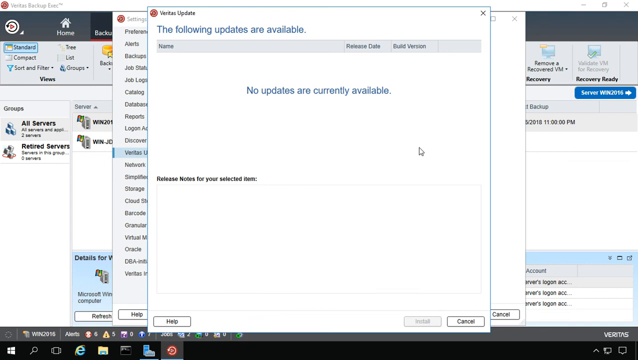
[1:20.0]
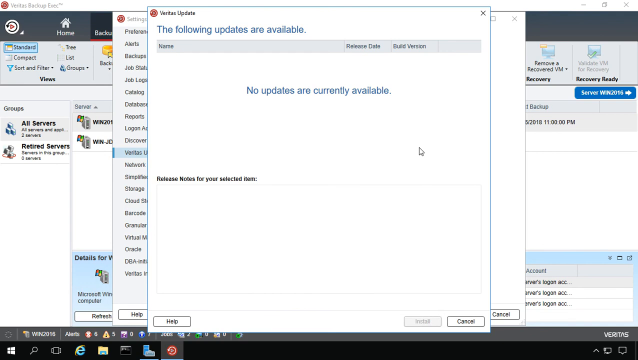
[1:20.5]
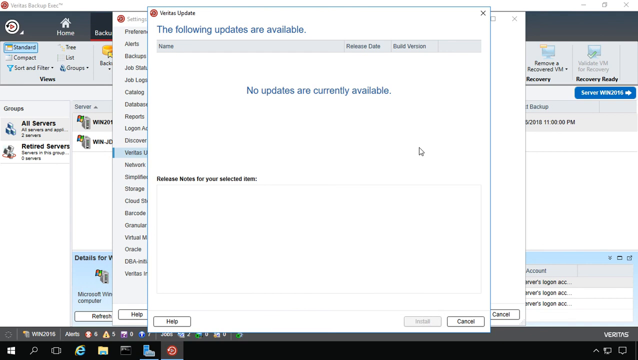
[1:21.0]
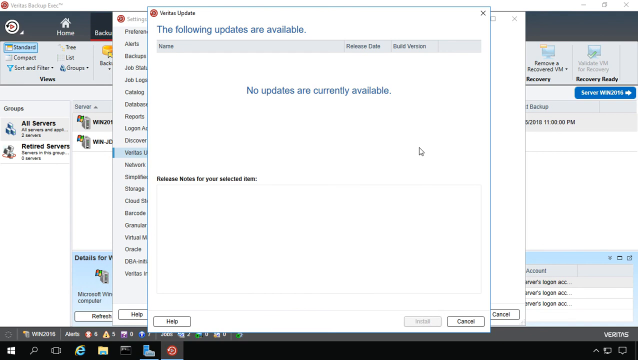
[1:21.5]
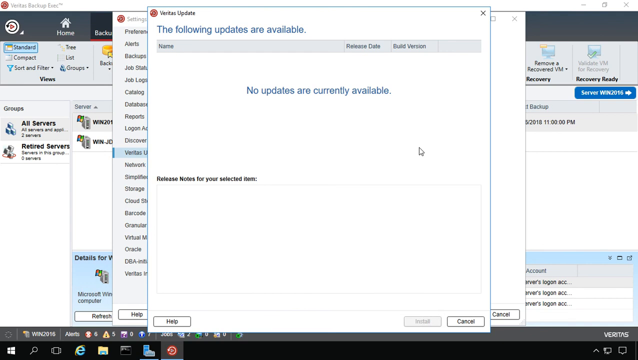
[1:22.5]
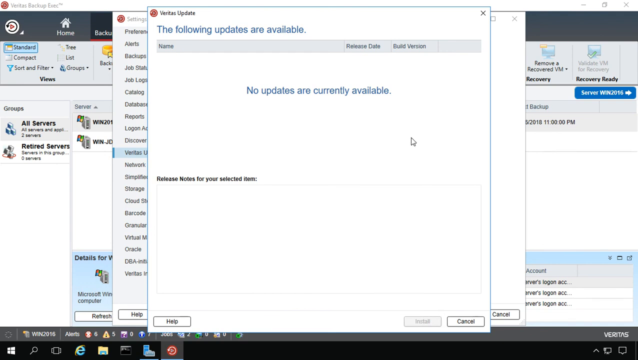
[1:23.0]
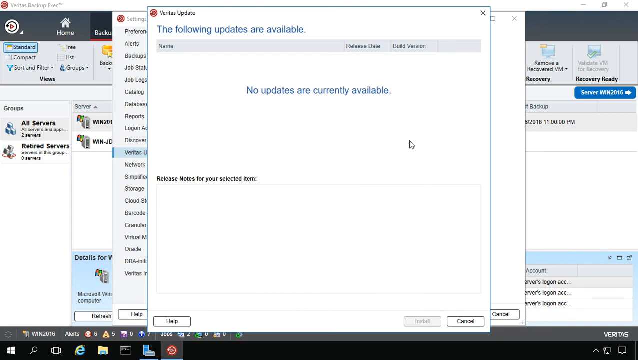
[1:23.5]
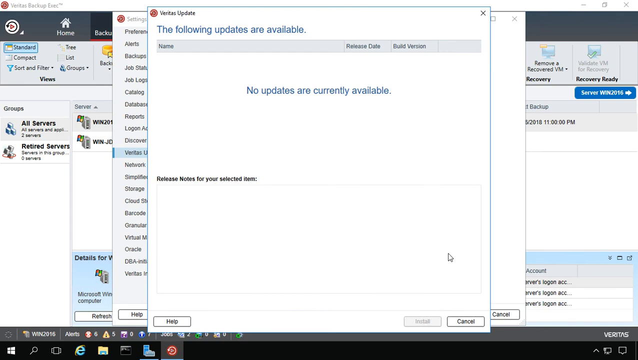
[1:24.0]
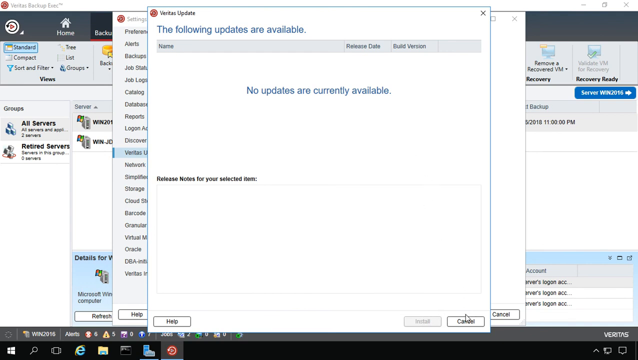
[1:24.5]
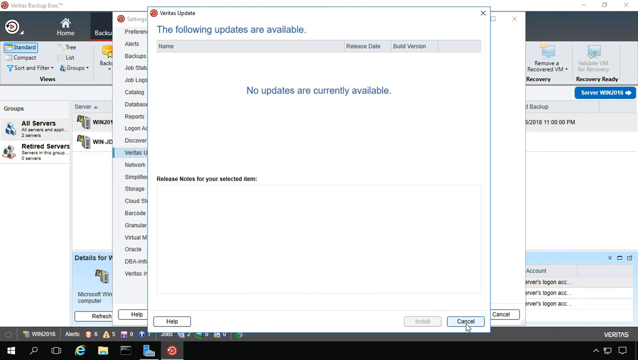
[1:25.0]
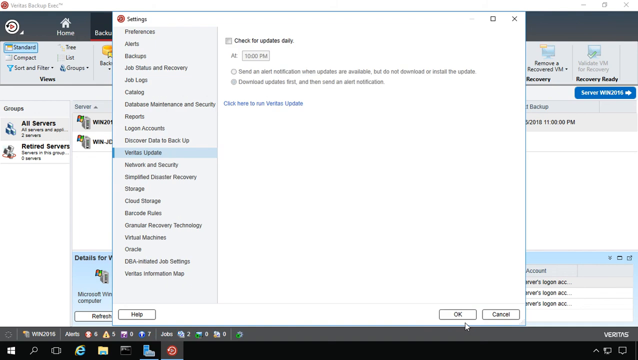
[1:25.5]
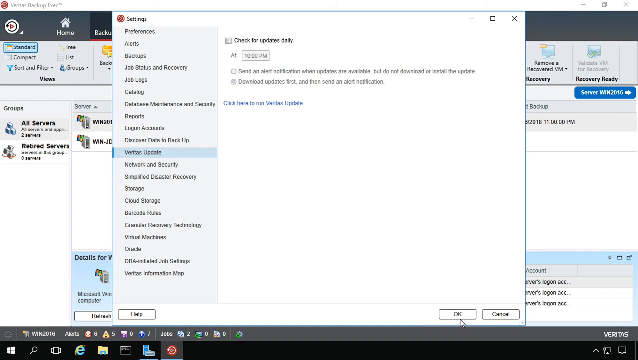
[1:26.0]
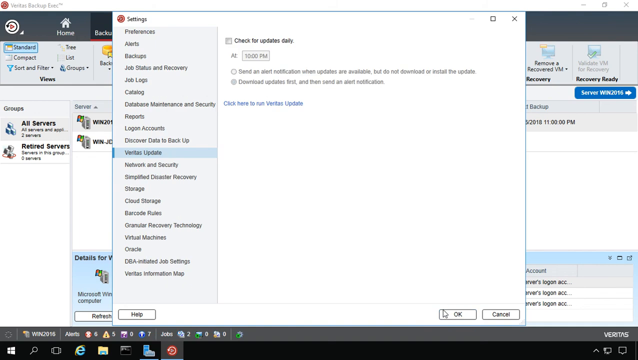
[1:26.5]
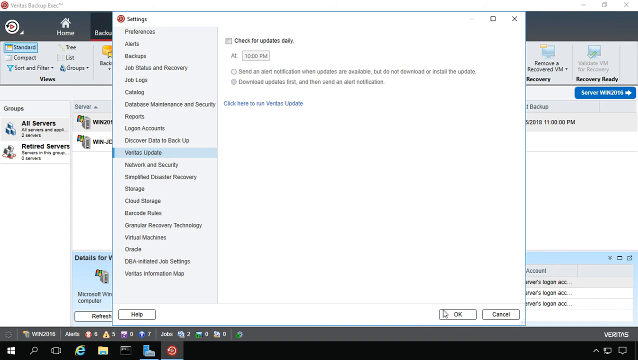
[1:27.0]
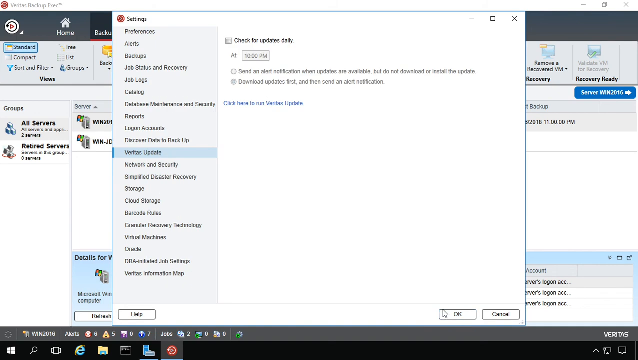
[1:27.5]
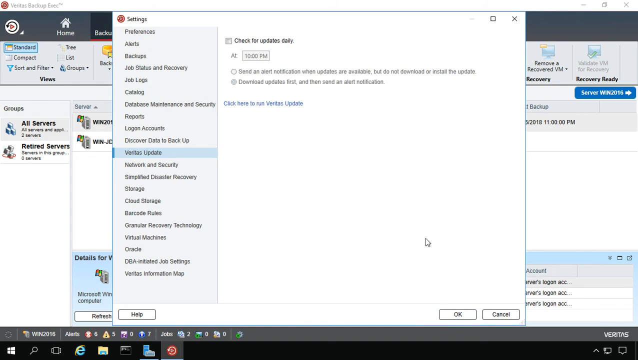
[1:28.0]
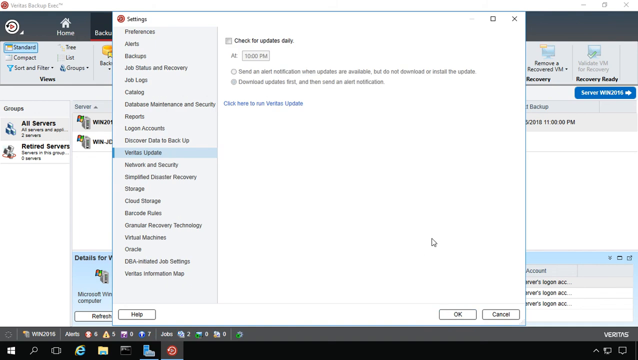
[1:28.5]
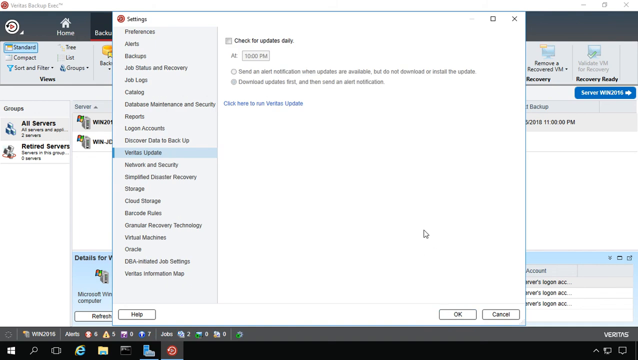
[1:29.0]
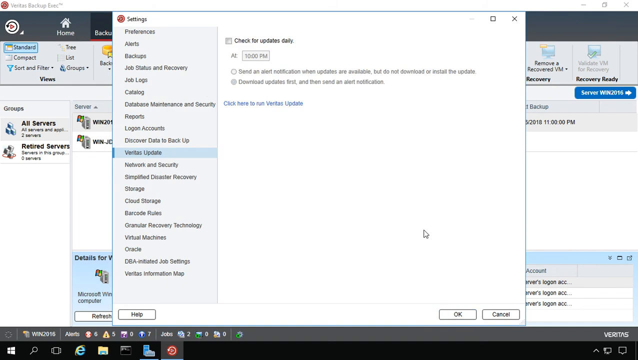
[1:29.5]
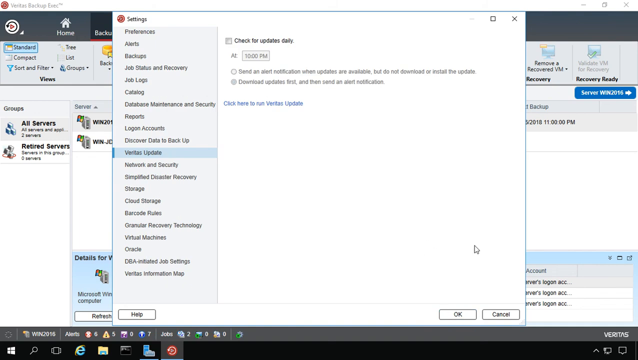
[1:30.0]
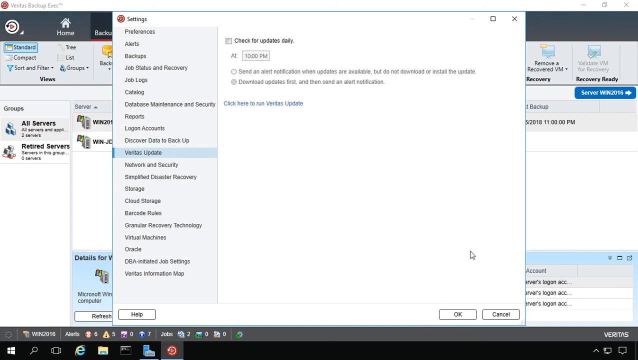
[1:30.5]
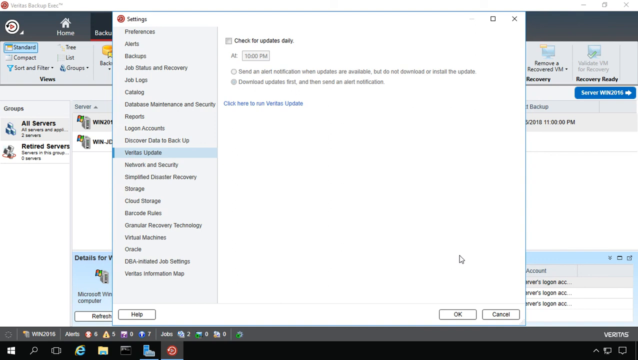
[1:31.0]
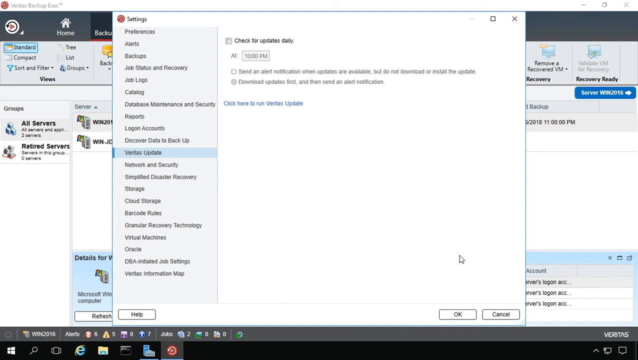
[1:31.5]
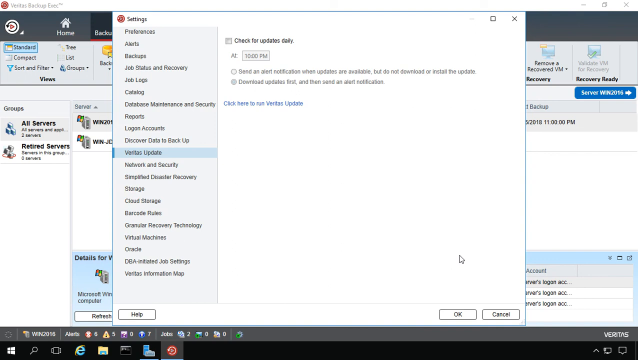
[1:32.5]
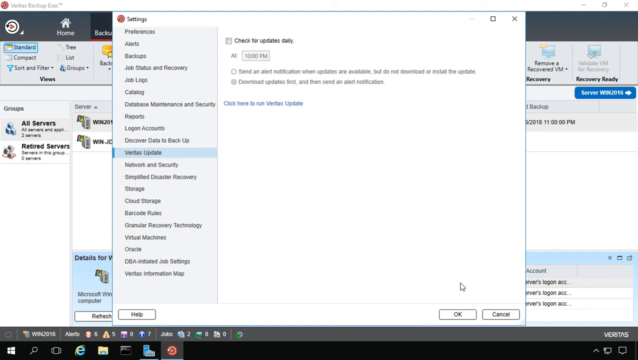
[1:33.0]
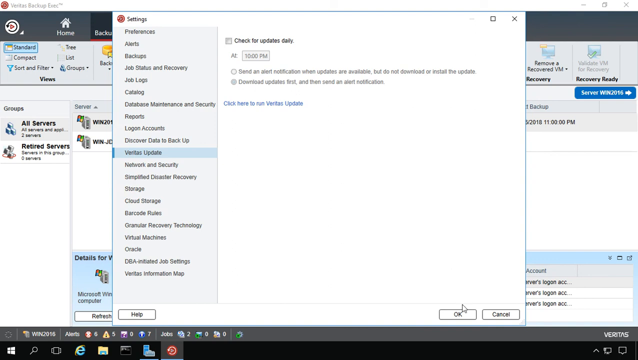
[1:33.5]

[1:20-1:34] The result of unchecking the daily update check is shown: there are no updates available. The person looks at the screen, then clicks cancel to close the window. The previous settings window appears, and the check is no longer there. The OK and cancel buttons are in the lower right corner and the help button is in the lower left corner, with preferences, alerts and the other settings listed on the left side of the screen. The person hovers over the OK button, and the video ends.